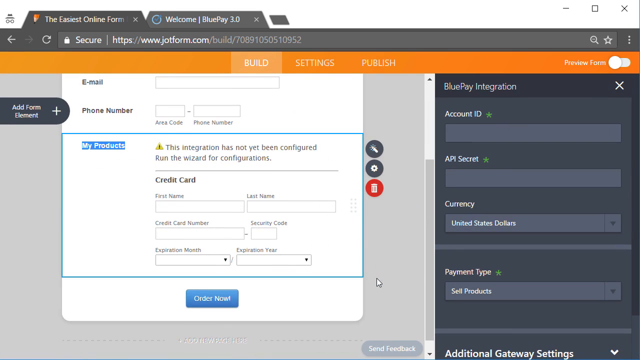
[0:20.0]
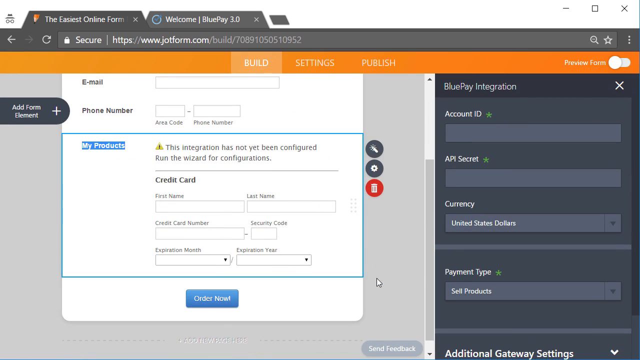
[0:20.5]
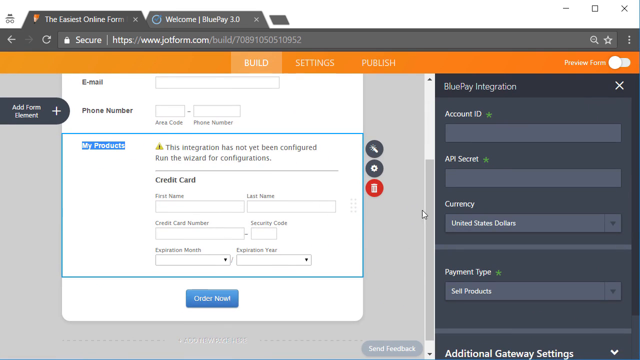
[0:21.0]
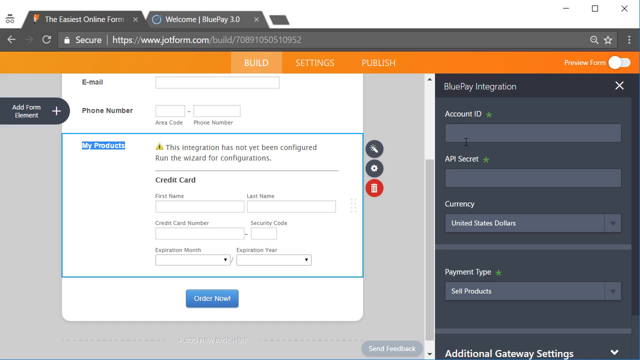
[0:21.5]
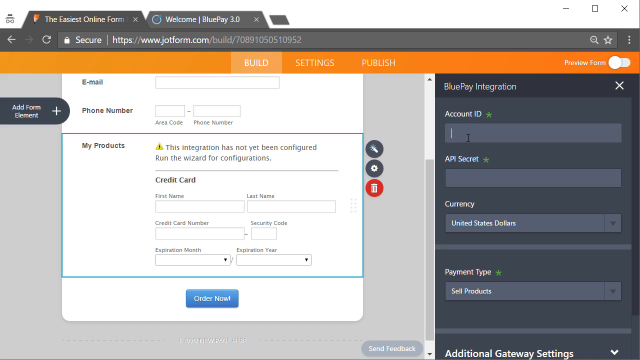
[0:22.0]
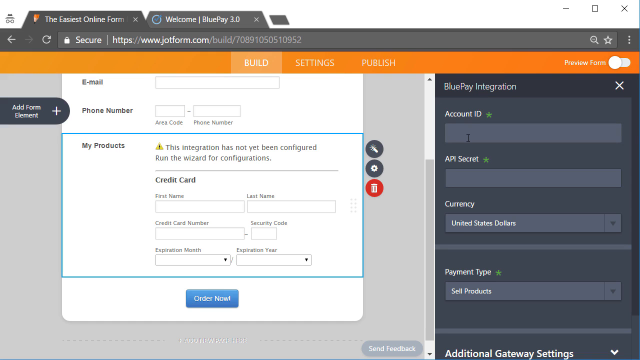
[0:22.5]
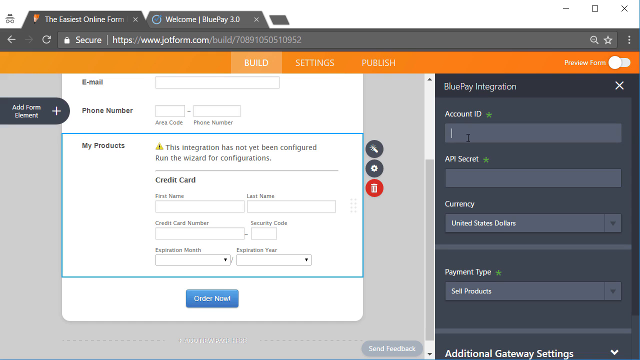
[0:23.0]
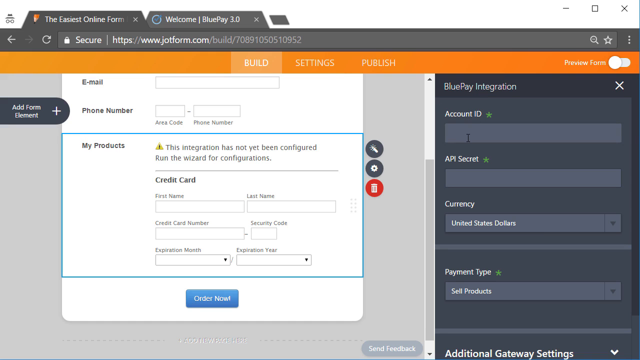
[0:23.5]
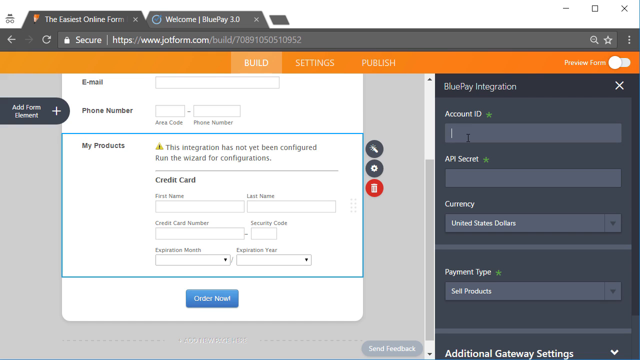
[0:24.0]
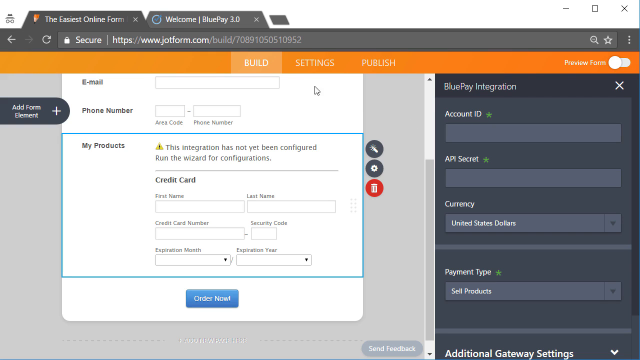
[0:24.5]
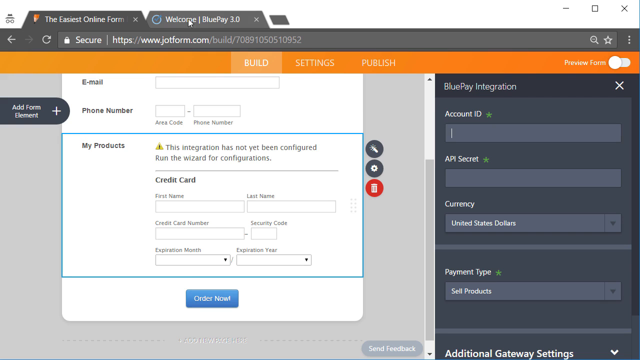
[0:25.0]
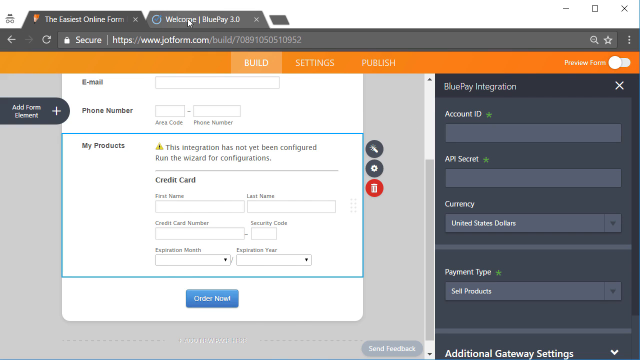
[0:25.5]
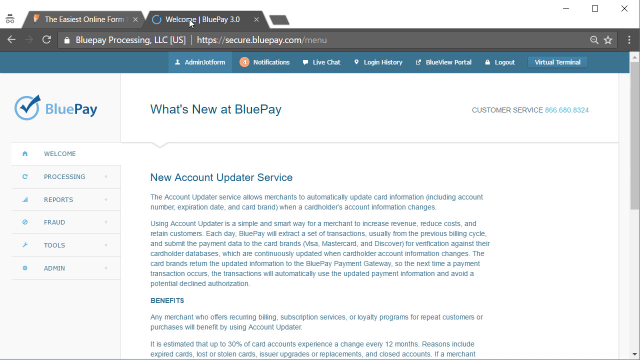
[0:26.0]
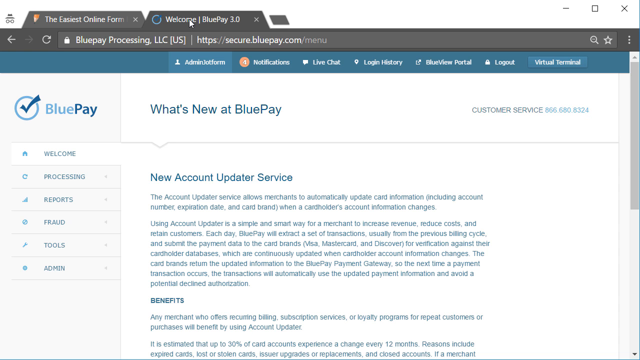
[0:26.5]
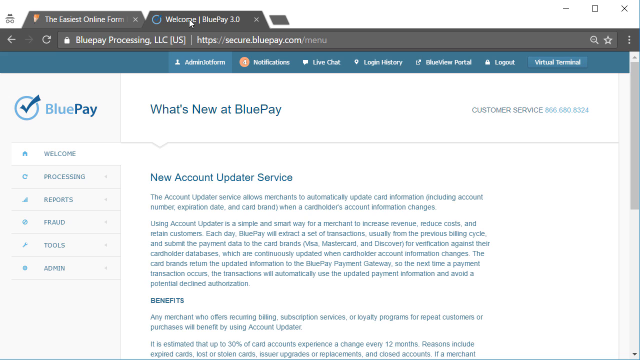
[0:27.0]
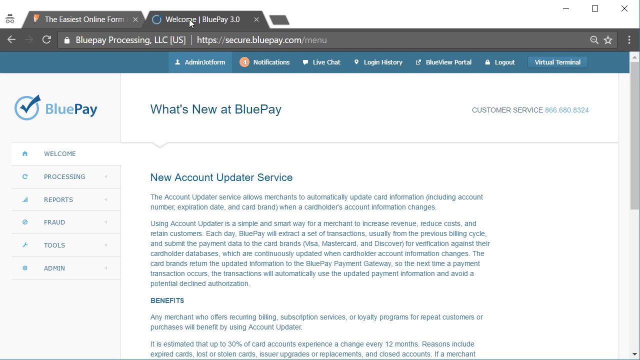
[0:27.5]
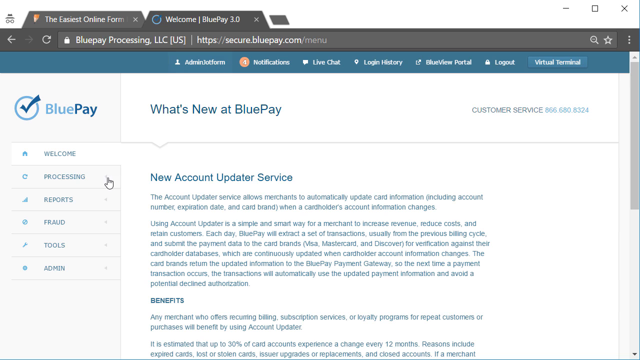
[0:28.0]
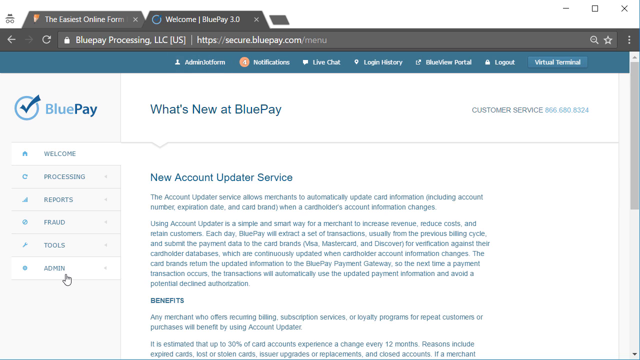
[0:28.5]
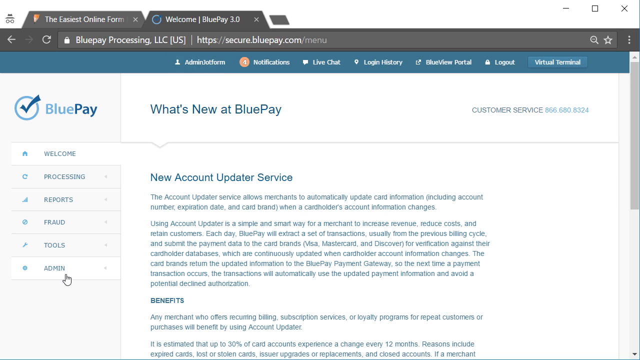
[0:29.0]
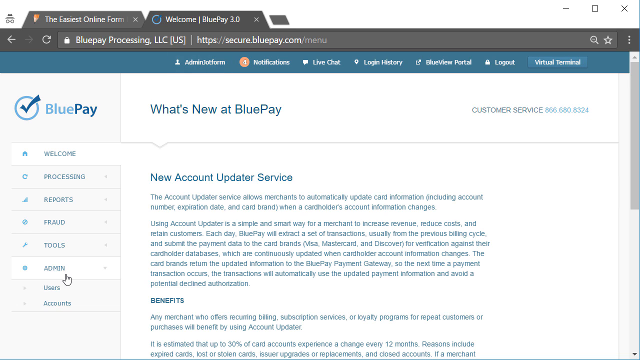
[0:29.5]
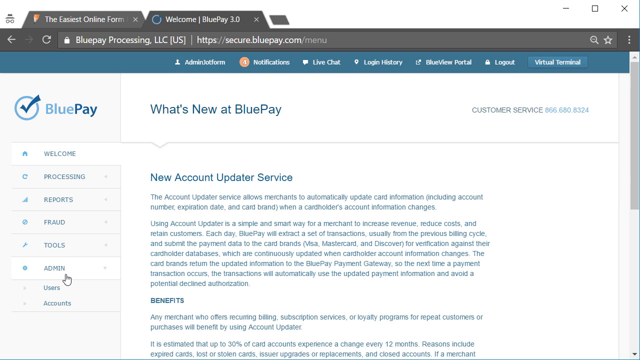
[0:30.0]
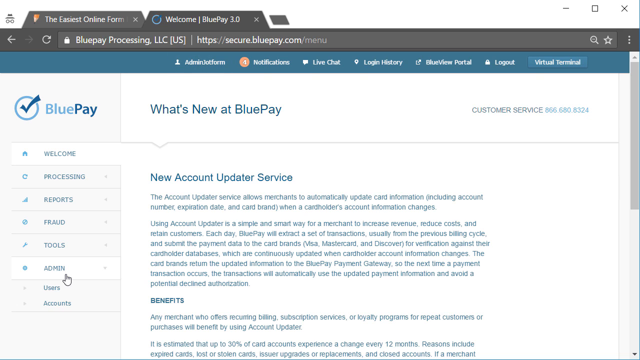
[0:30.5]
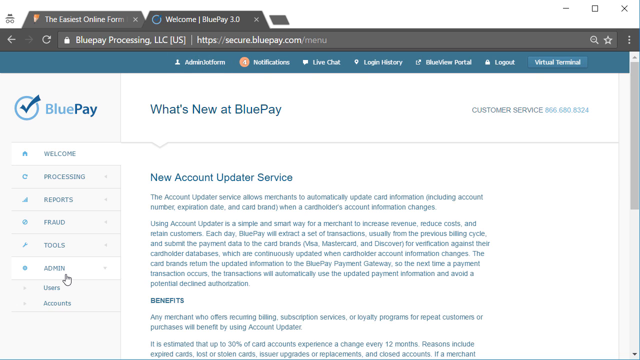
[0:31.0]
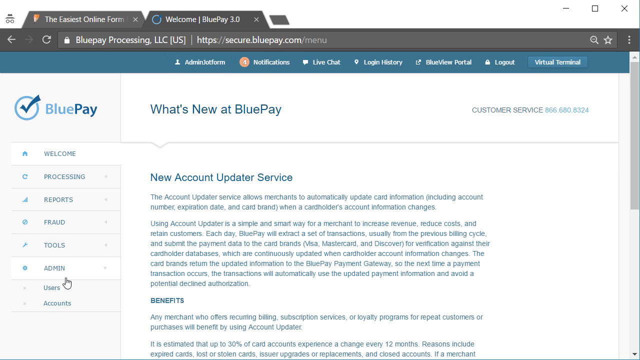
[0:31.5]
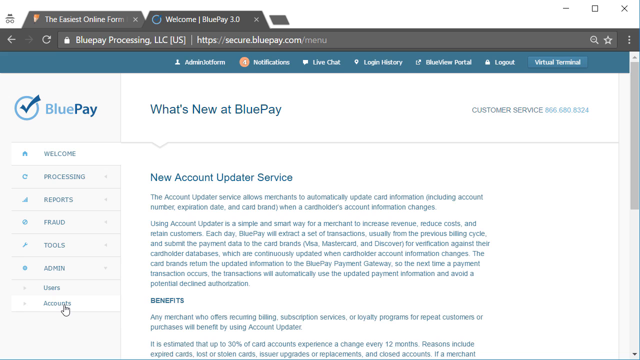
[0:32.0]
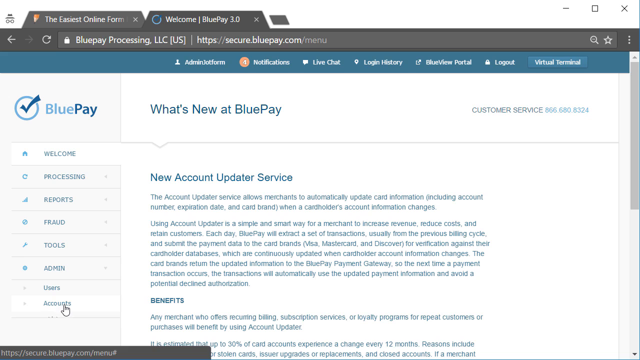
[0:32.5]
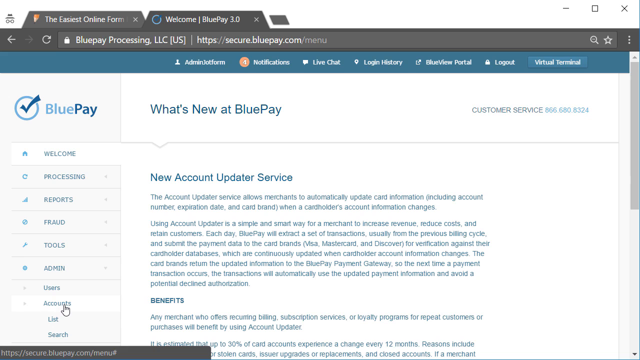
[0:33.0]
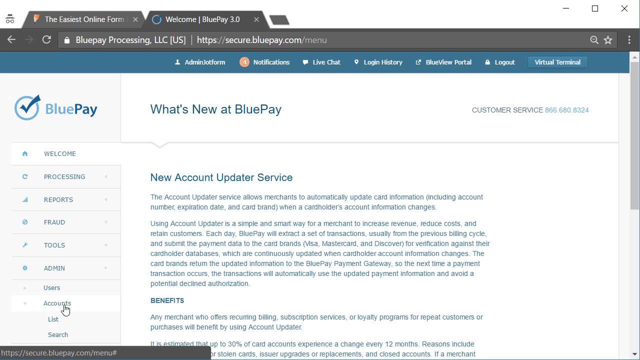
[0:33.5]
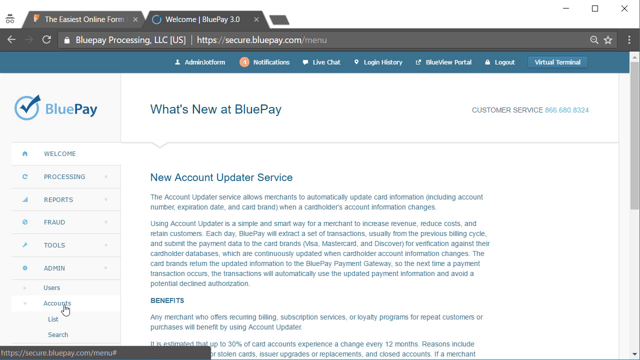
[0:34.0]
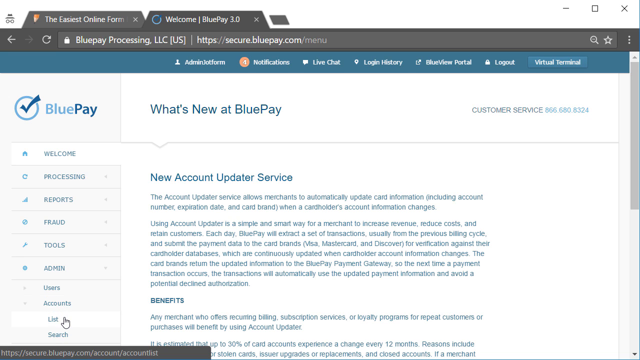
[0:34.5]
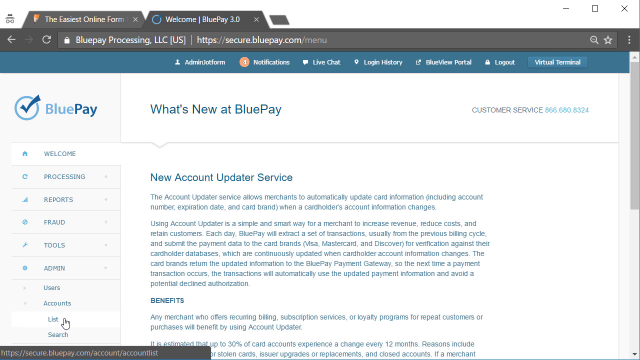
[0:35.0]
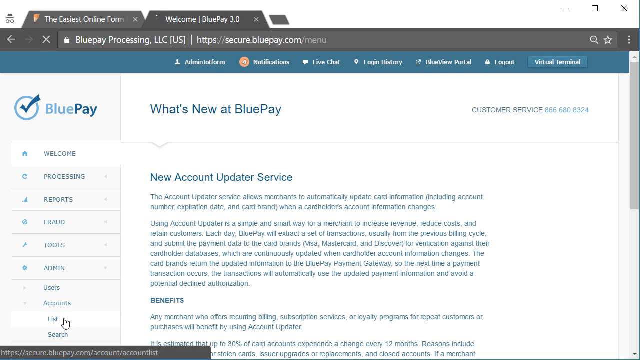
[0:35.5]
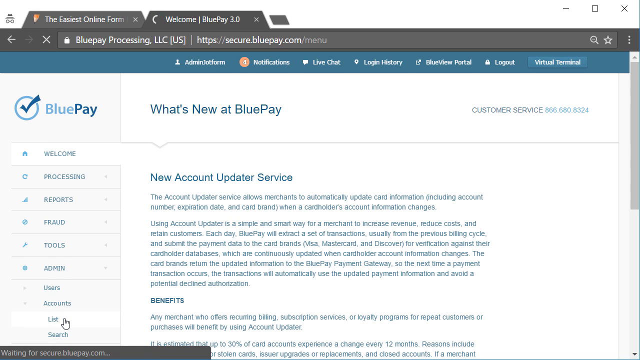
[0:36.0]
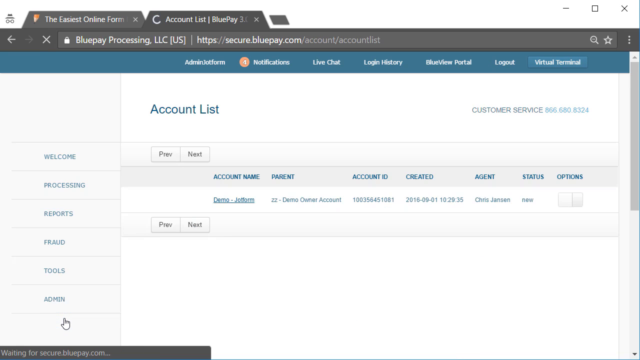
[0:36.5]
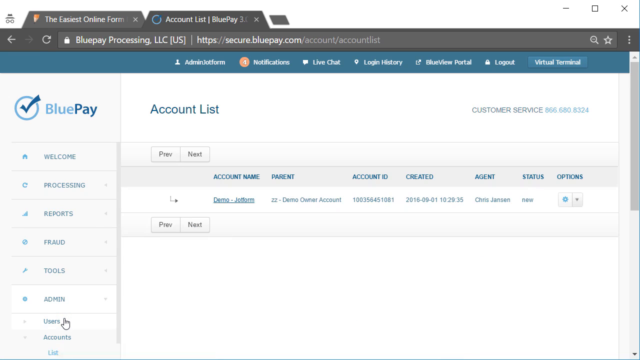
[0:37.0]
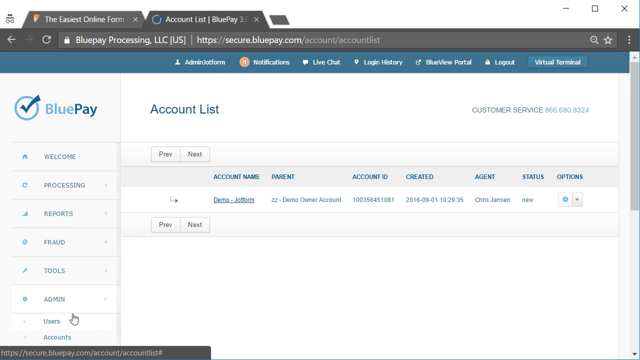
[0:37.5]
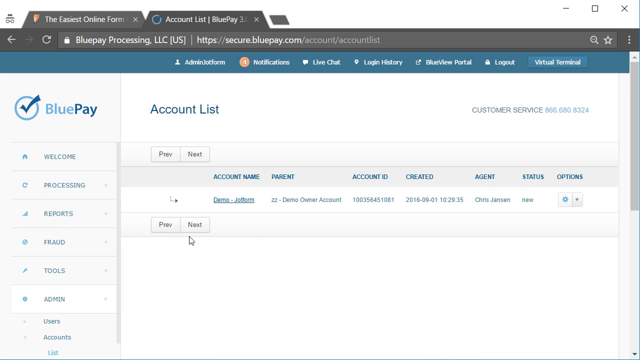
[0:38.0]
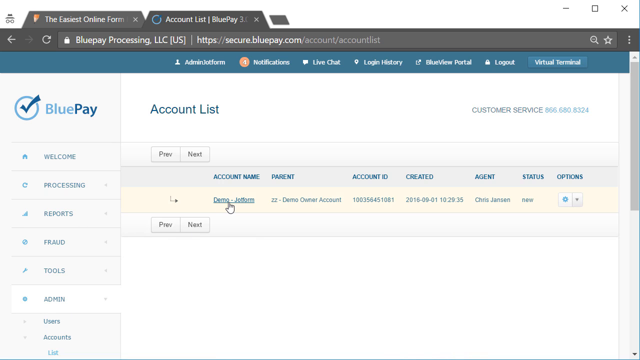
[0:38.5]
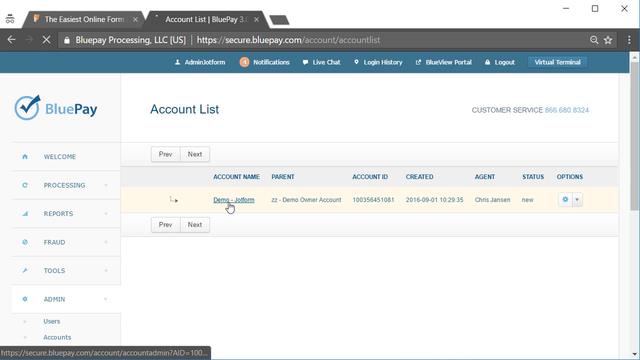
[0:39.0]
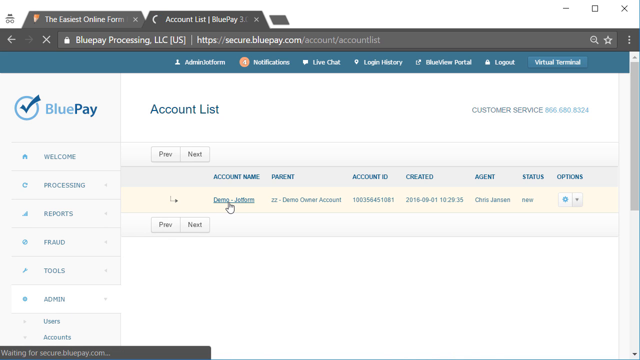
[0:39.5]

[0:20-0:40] BluePay is dragged onto the form in the middle of the screen, which adds a my products label to the form. It reads that this integration has not been configured and points to the wizard for configuration, and it shows credit card with text boxes for first name, last name, credit card number, security code, expiration month and expiration year. The BluePay wizard pops up on the right-hand side of the screen, asking for Account ID and API Secret, with a drop-down menu for Currency currently set to United States Dollars and a drop-down menu labeled Payment Type. The user clicks the Account ID text box, then switches to a new tab in the browser, BluePay Processing LLC, and moves down to the bottom of the left-hand menu to an icon that reads Admin. This opens a sub-menu; the mouse moves down to an icon that says list and selects it. This brings up a page labeled account lists, and the user selects the DemoJotForm entry.